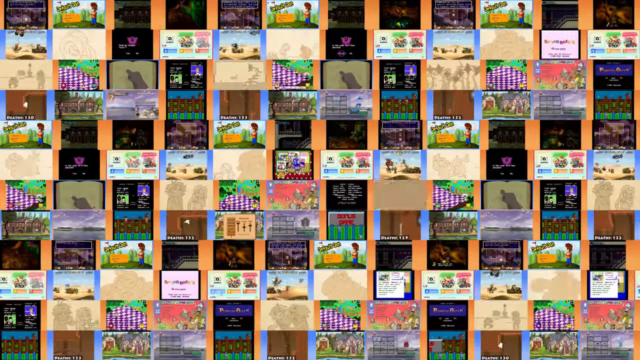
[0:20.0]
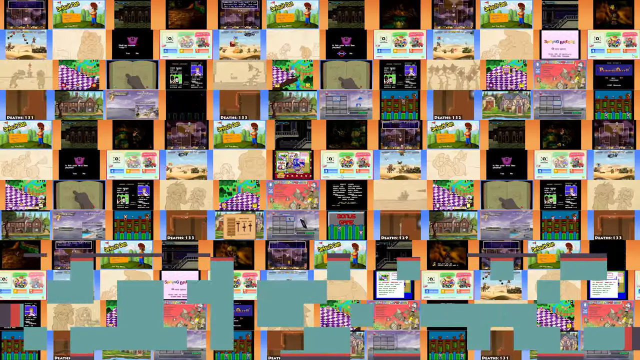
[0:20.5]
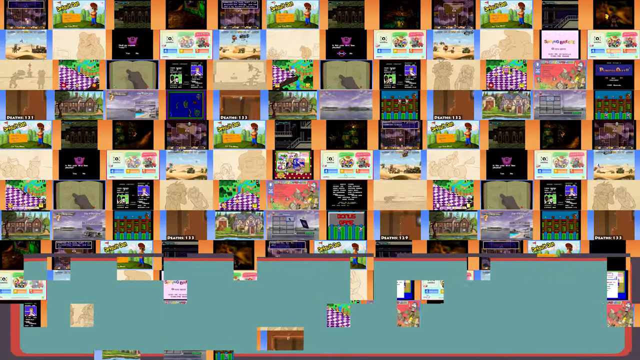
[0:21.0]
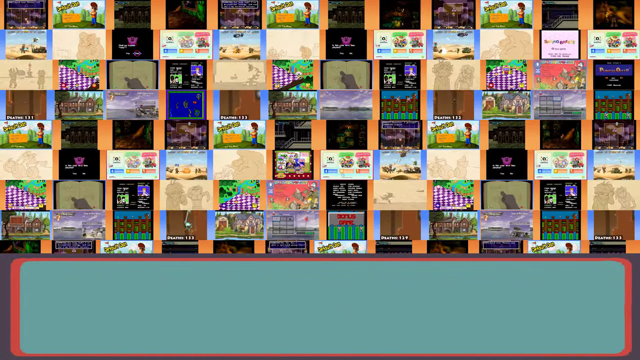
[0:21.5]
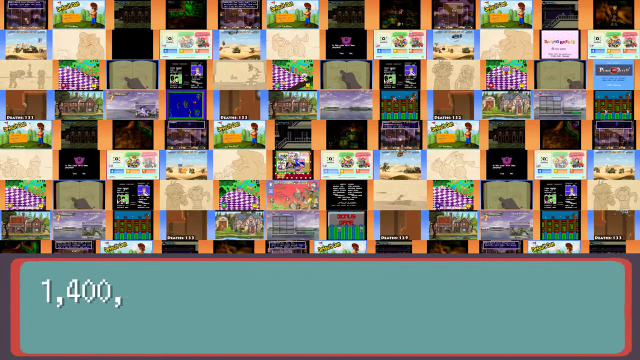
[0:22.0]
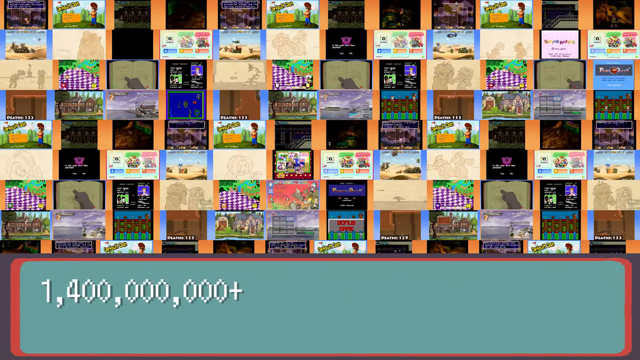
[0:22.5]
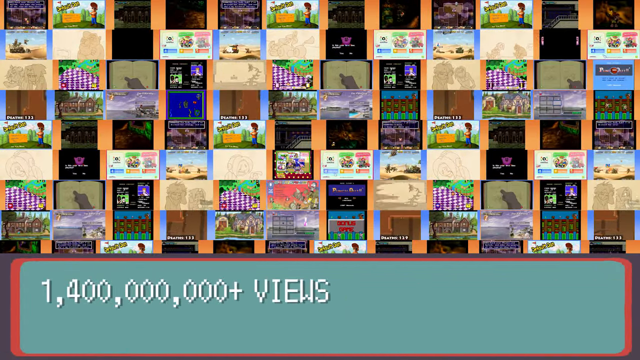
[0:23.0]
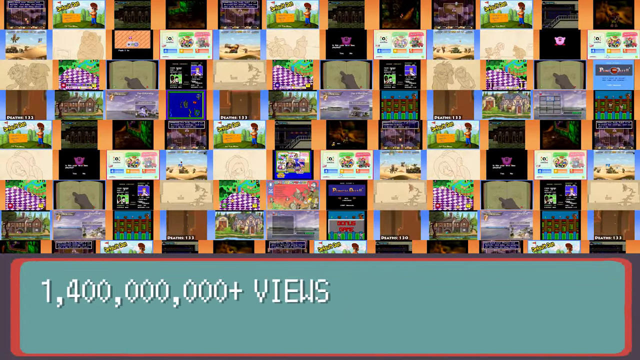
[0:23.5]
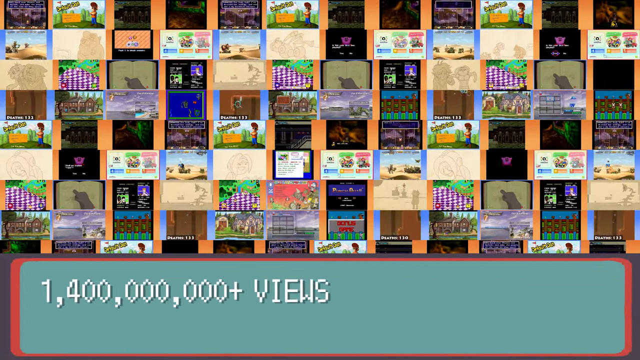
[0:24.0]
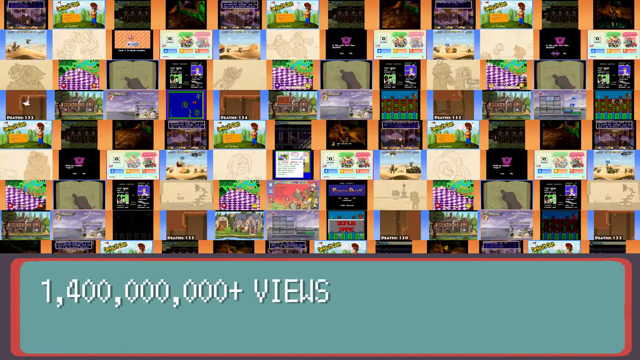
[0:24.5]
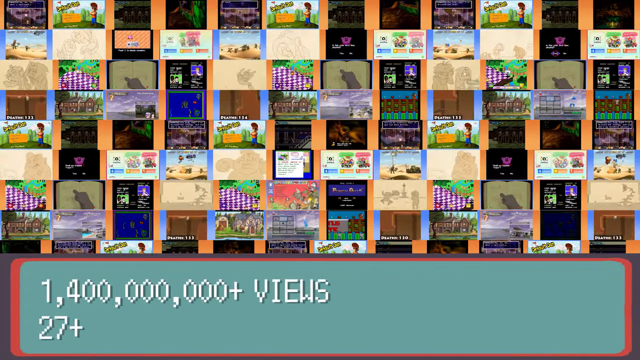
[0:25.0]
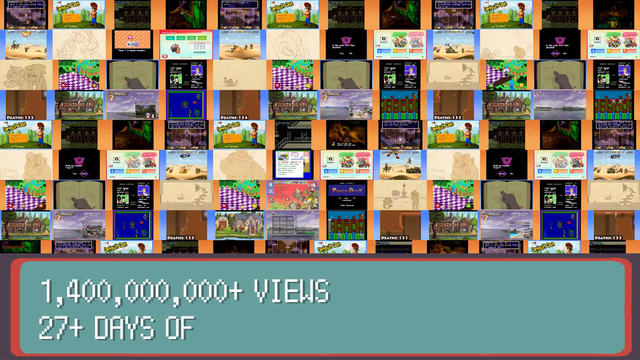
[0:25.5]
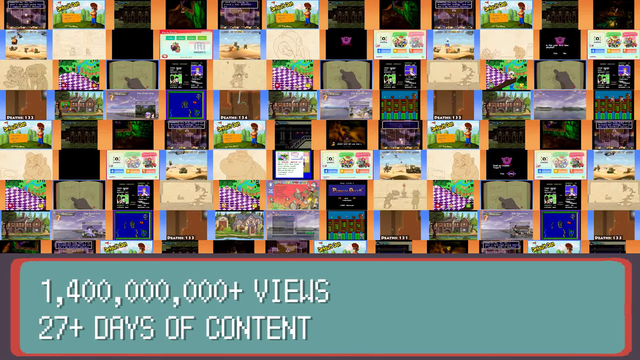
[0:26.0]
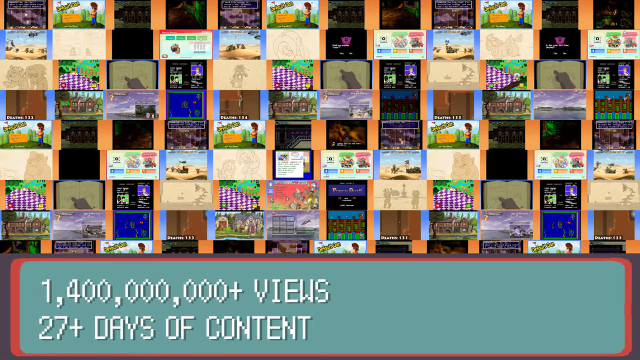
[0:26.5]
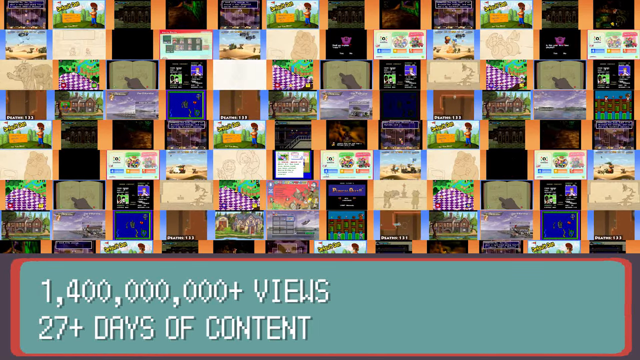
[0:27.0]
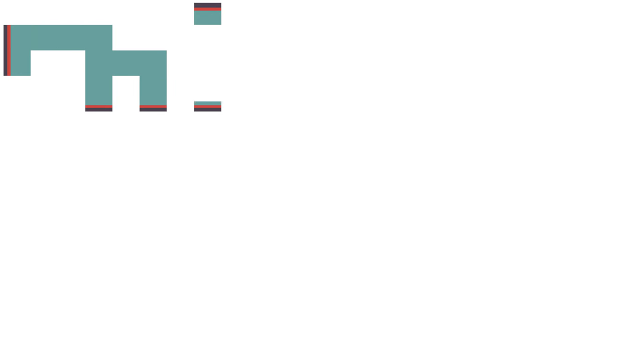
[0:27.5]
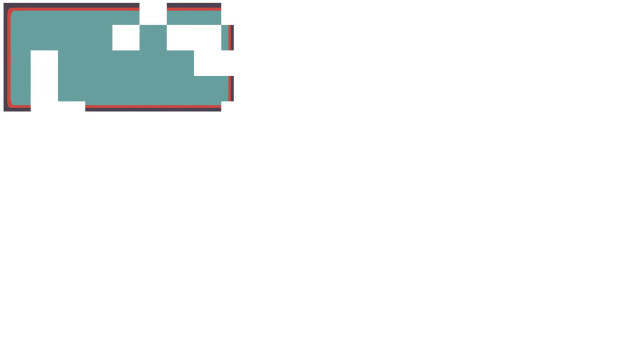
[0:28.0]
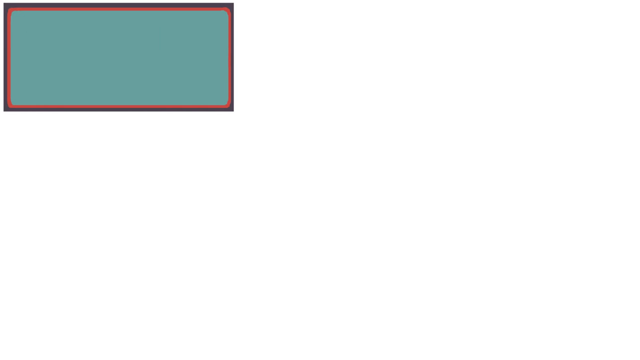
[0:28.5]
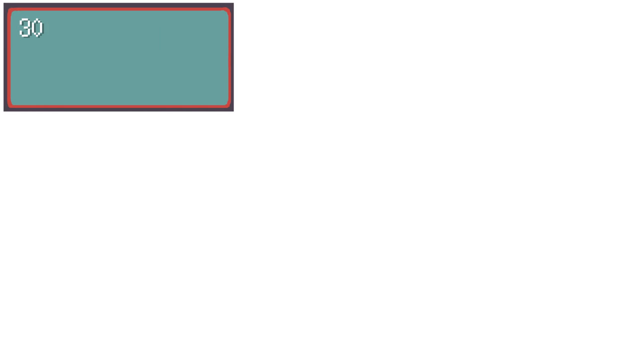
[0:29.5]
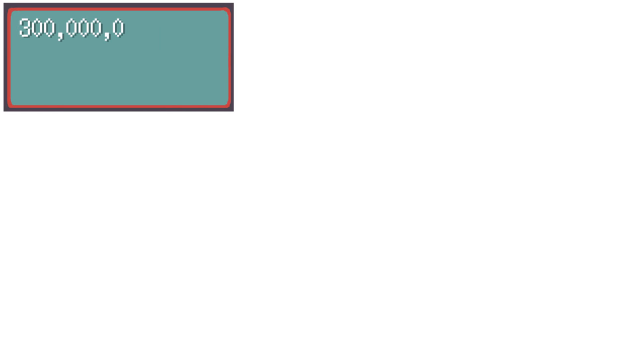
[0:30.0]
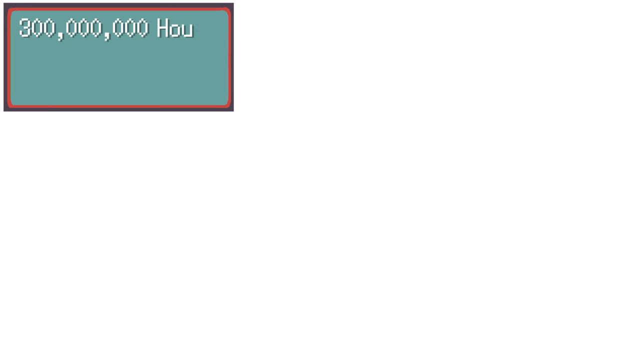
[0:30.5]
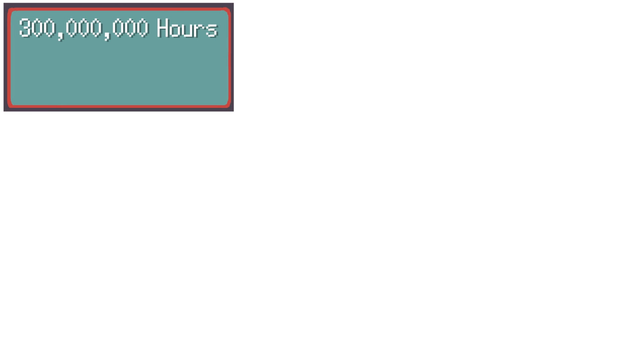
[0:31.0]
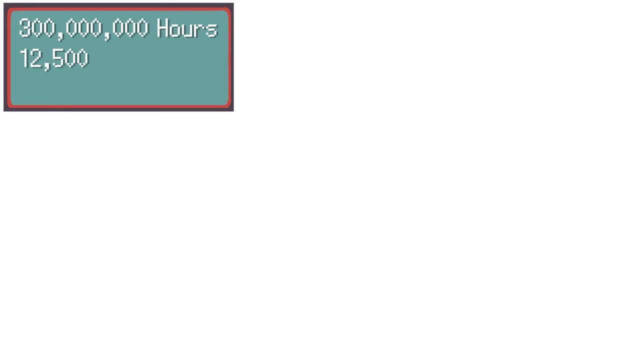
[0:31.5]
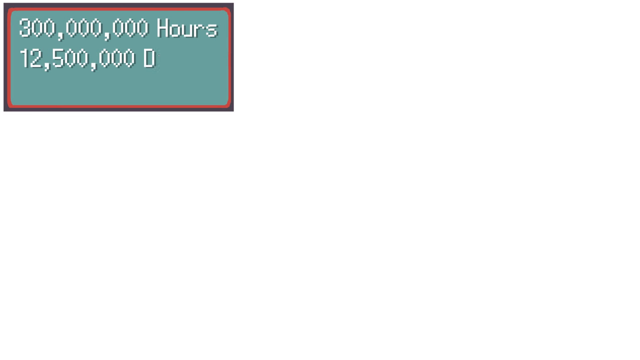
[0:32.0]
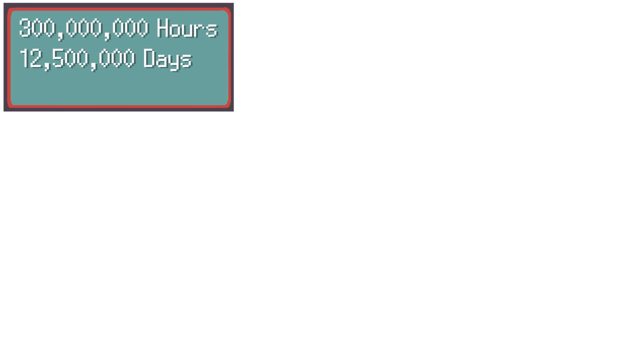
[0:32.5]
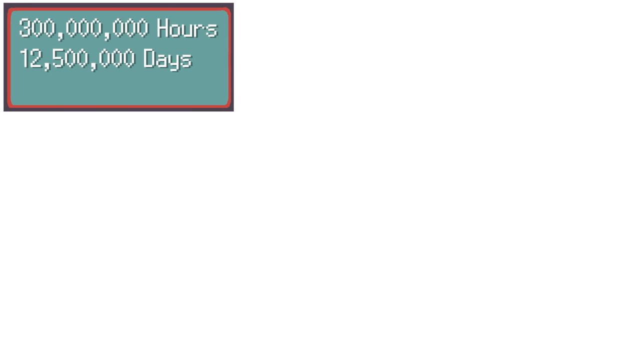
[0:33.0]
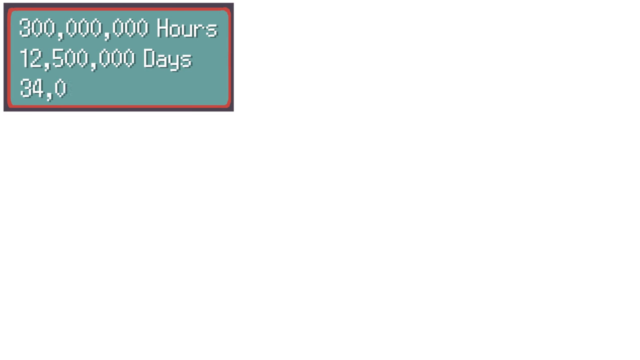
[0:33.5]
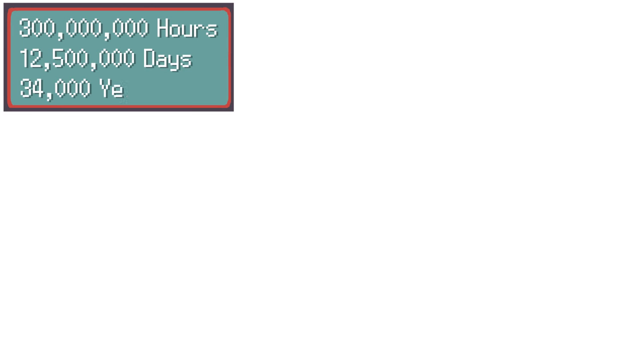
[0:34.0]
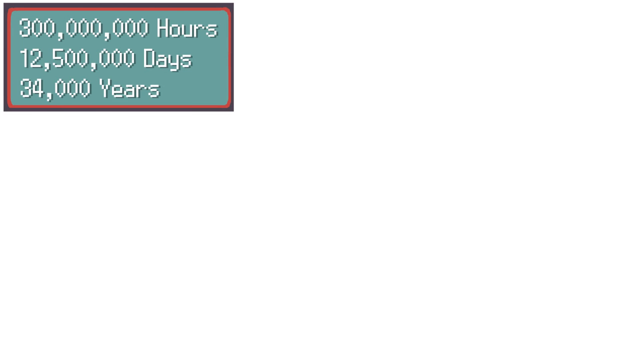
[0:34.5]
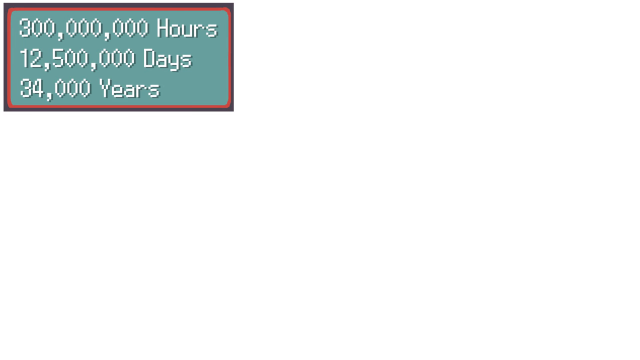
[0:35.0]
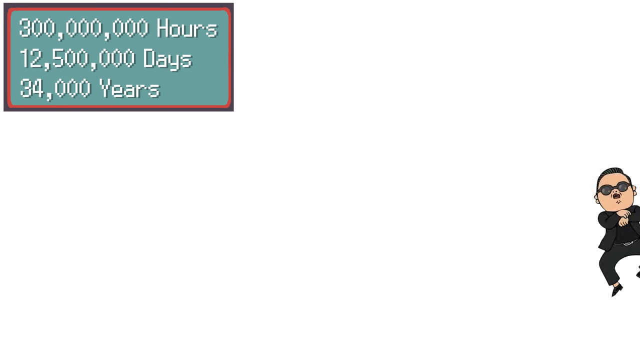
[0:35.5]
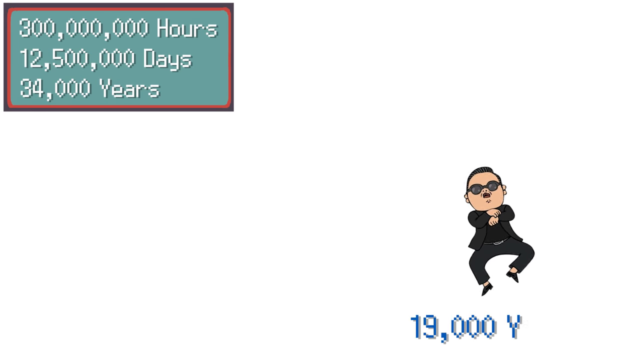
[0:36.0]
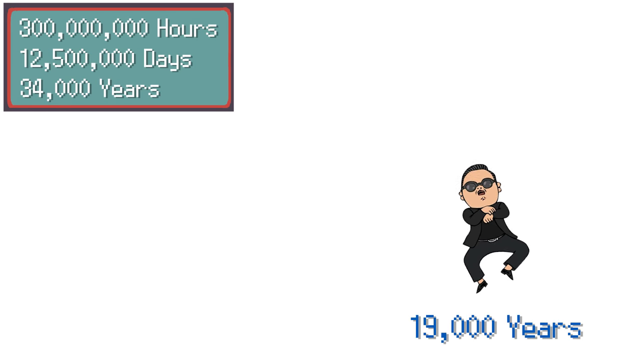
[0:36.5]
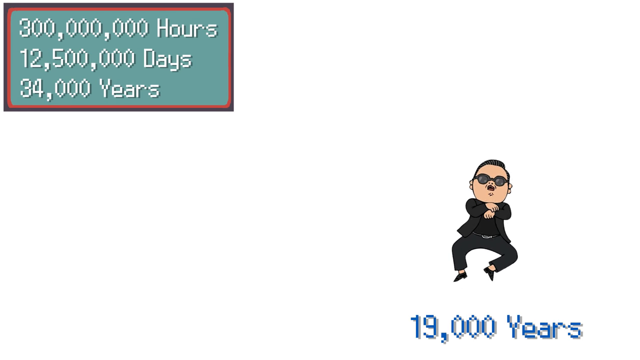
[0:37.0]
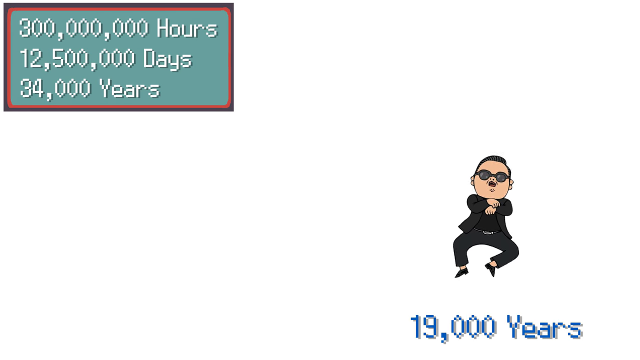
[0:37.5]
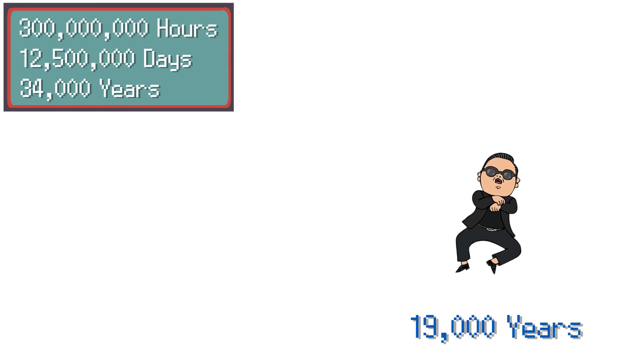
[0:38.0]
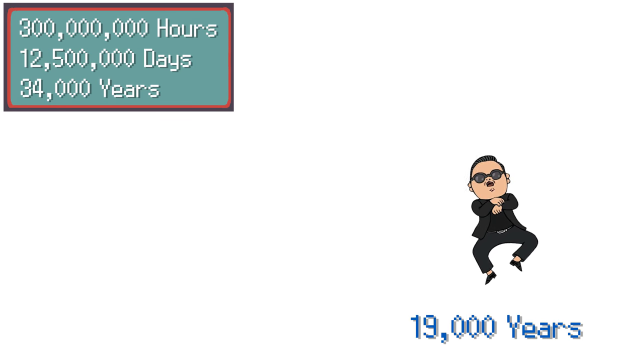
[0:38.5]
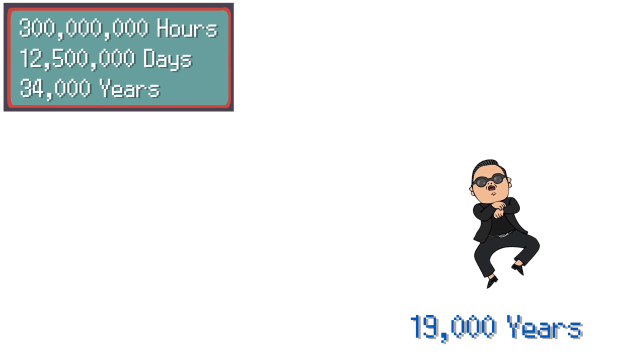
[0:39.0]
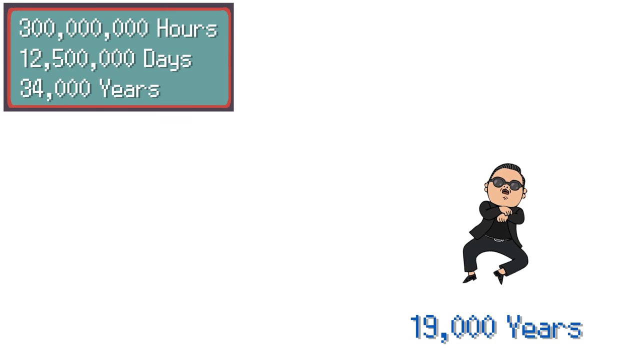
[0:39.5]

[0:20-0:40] Several games are repeated across the screen; they look like Sonic, Kirby, and other platformers. They are almost in a pattern-like shape, with display screens as if watching TV or different screens. What appears to be a little square turns into a larger green tilted rectangle with a text box similar to those in Pokemon games, stating "1,400,000,000 plus views. 27 plus days of content." Text similar to Pokemon battling then states "300 million hours," "12 million five hundred thousand days," and "34,000 years," followed by an animated version that states "19,000 years." What appears to be layers of Lego bricks, more like battleships, all black, appear, and the little animated characters fall down with them.